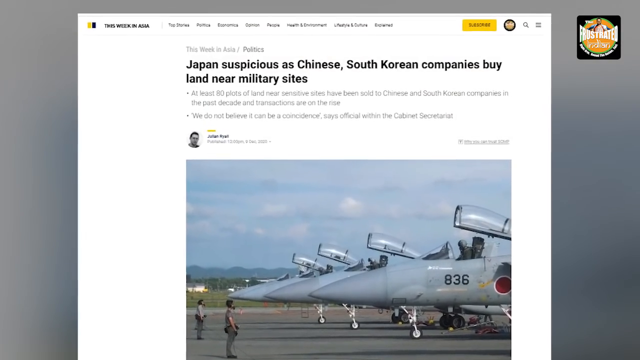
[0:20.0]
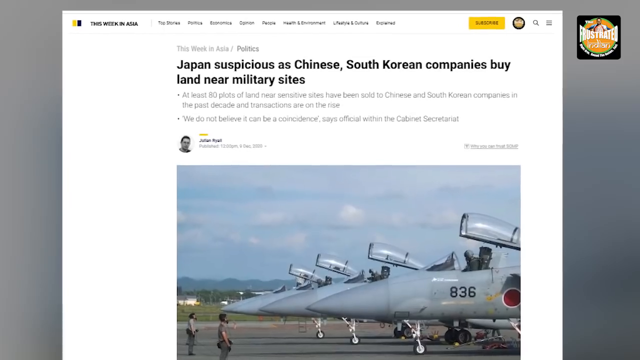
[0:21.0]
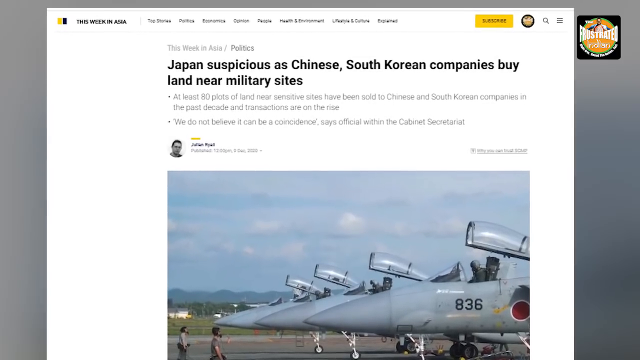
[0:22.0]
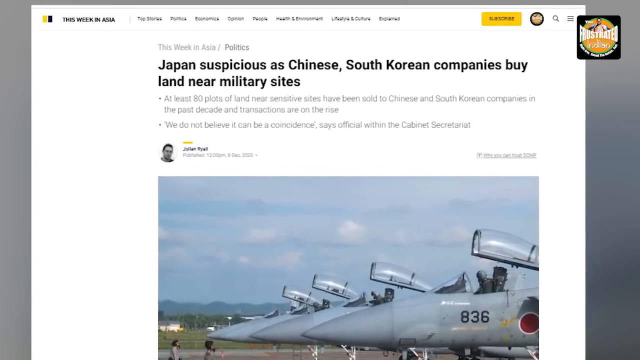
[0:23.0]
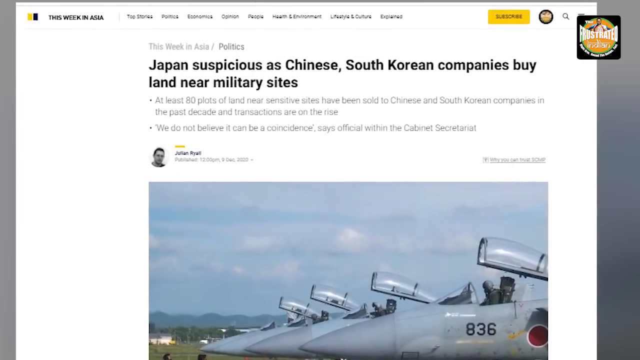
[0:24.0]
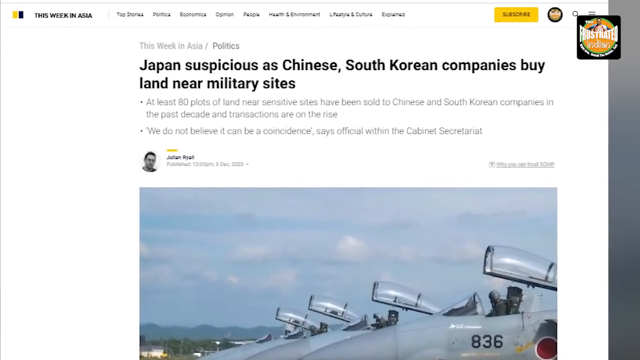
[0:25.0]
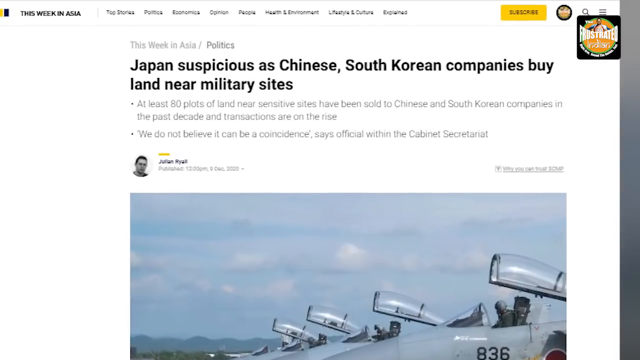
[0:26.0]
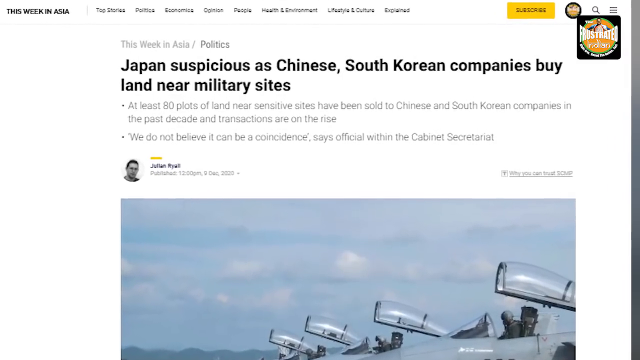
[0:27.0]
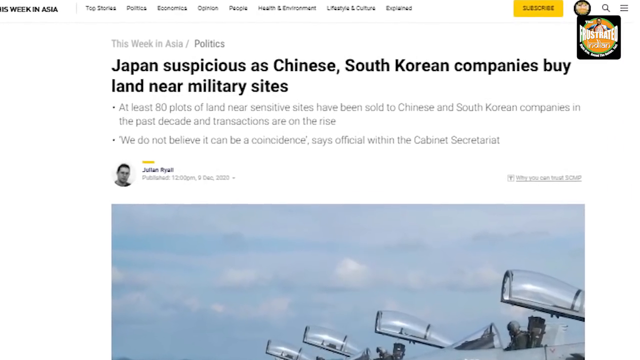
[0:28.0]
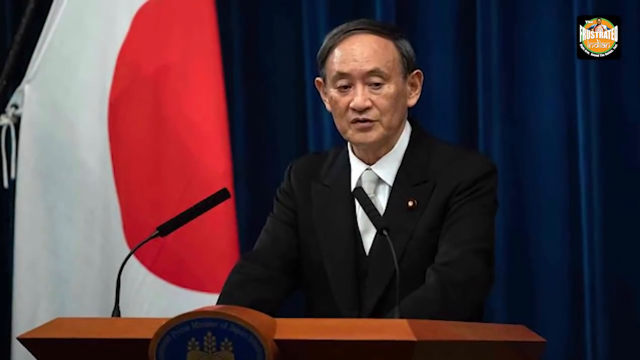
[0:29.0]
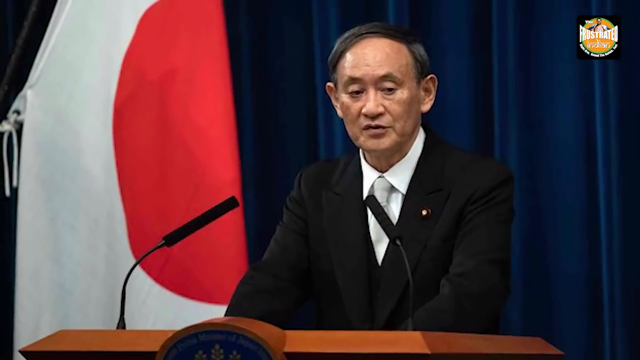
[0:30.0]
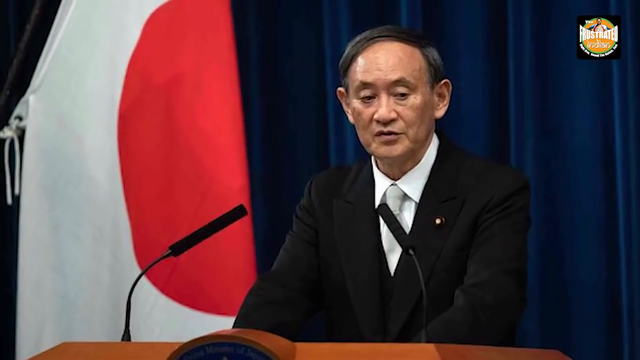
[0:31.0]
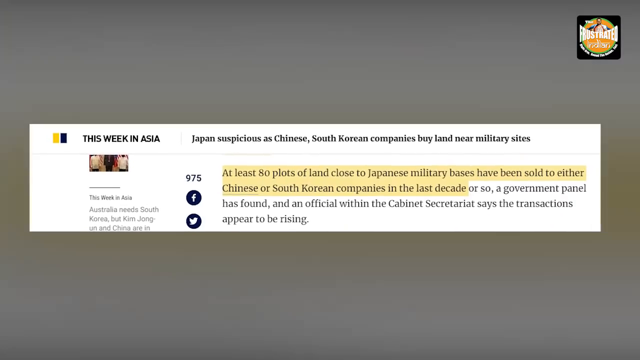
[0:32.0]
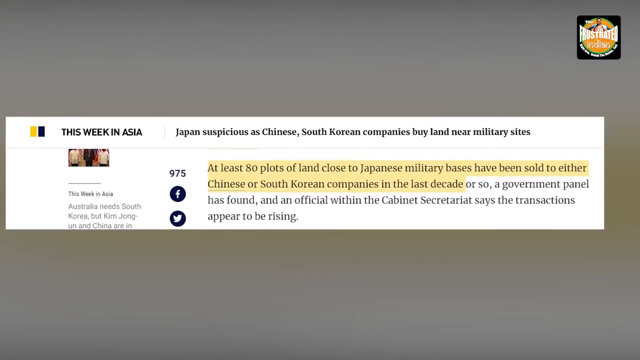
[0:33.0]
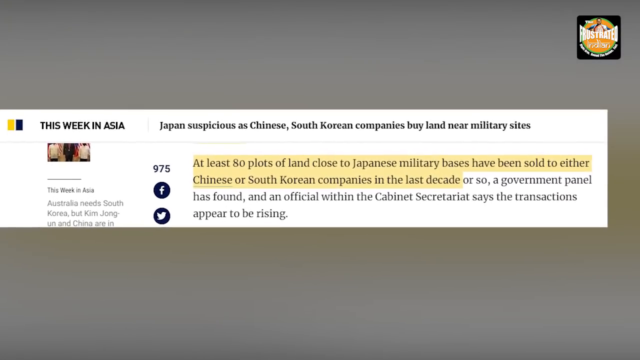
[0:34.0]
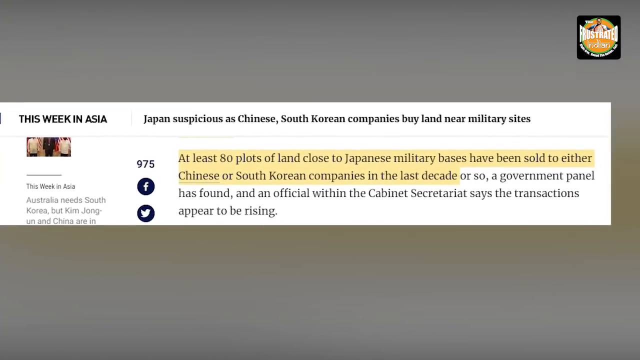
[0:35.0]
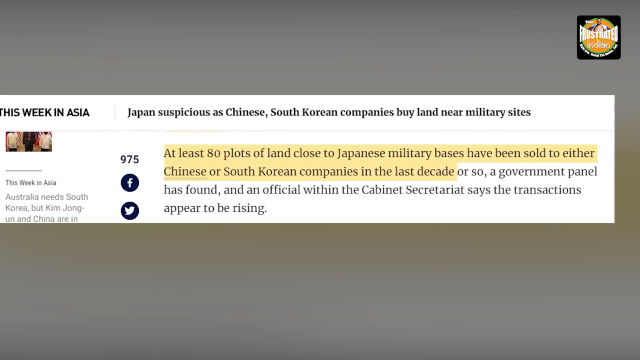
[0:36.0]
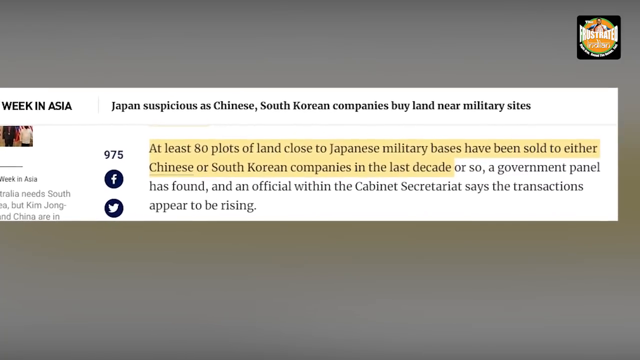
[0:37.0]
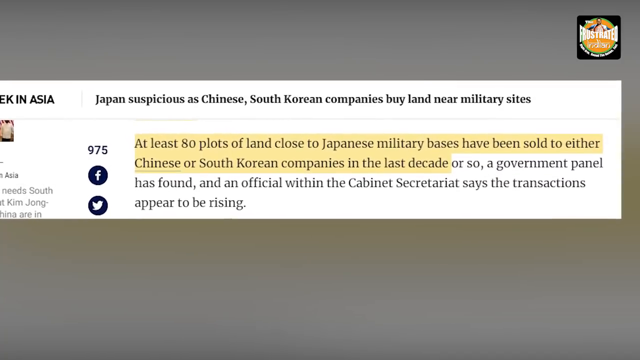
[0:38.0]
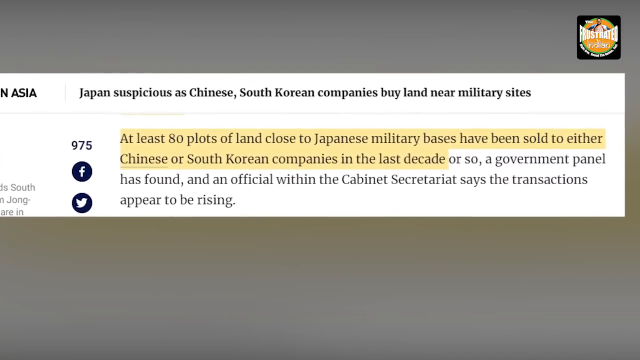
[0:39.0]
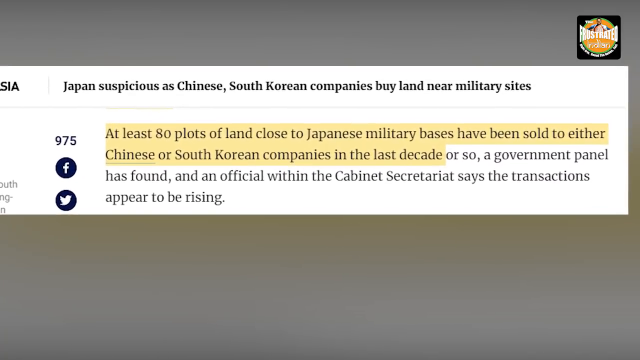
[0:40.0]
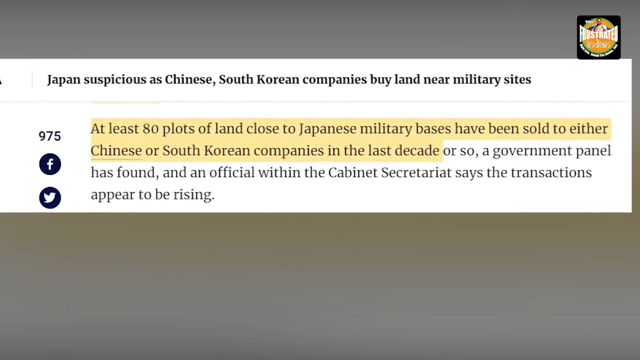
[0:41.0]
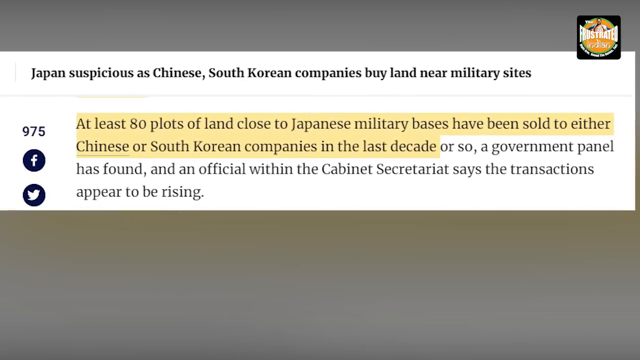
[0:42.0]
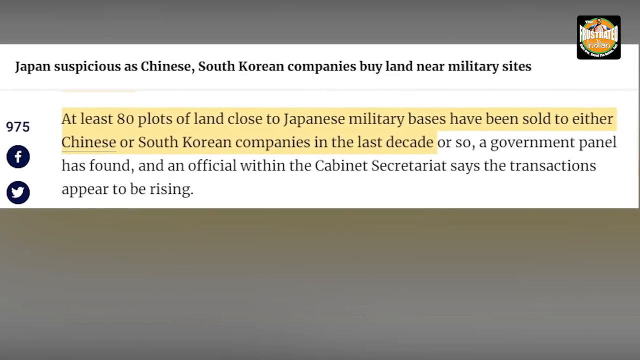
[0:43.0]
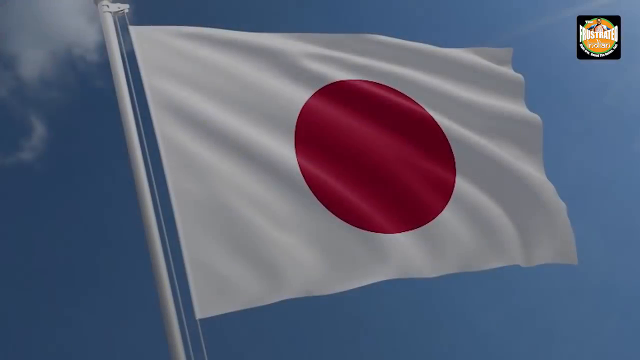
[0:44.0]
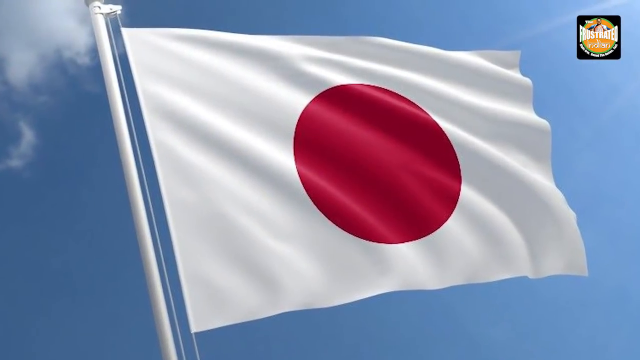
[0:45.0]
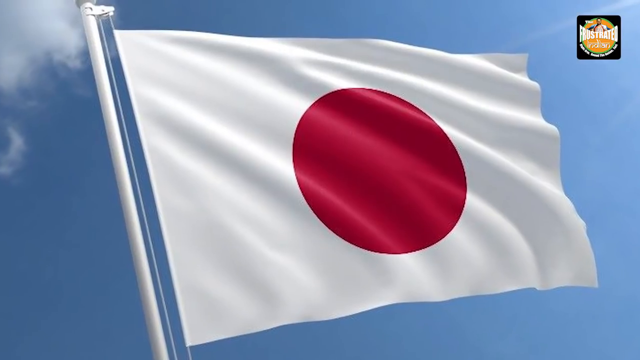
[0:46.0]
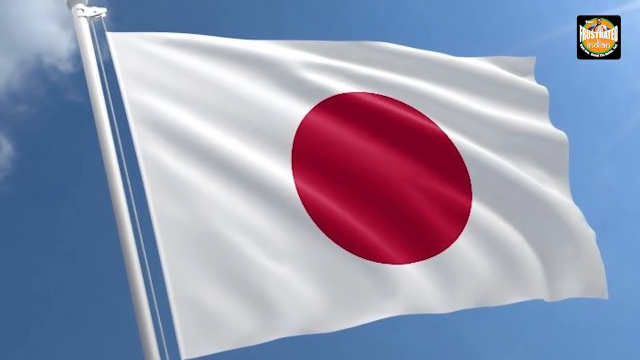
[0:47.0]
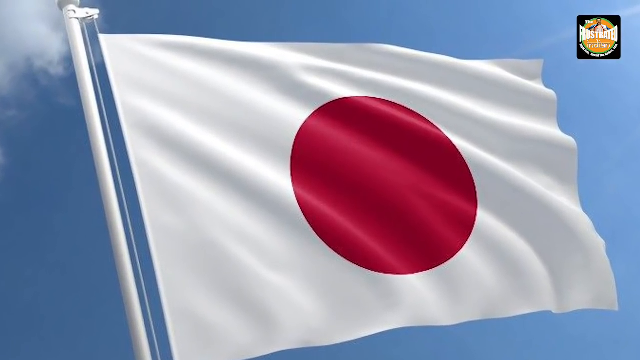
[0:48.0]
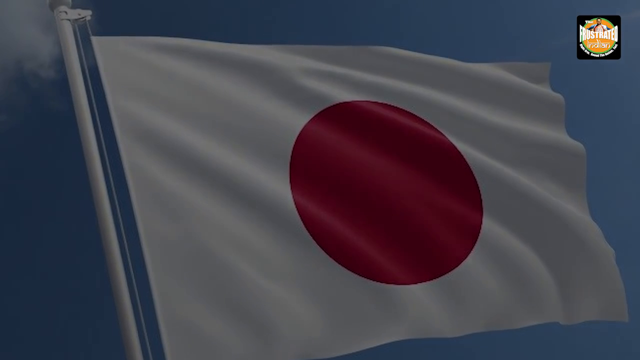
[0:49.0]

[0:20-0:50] What looks like an online newspaper article appears, with black font on a white background. In the lower part of the frame, within the web page, there is a photograph of various aircraft vehicles. Then a photo shows a man in elegant clothes in front of a reading room with two microphones. He wears a black jacket, a white shirt and a very light-colored tie. His appearance seems particularly neat, and the background behind him is blue, red and white. There is a slight zoom toward the man in the center of the frame. Next comes a small online newspaper article with rather small black text on a white background; some of the words are highlighted, appearing in black on a yellow background.